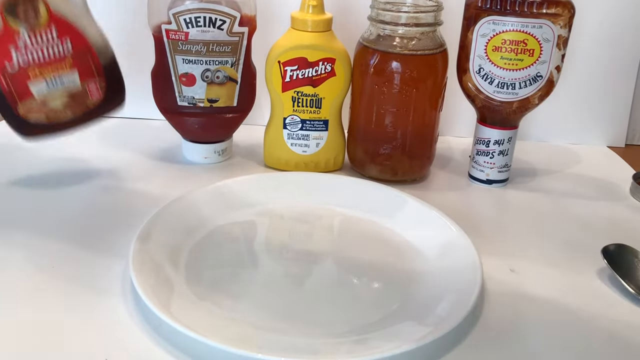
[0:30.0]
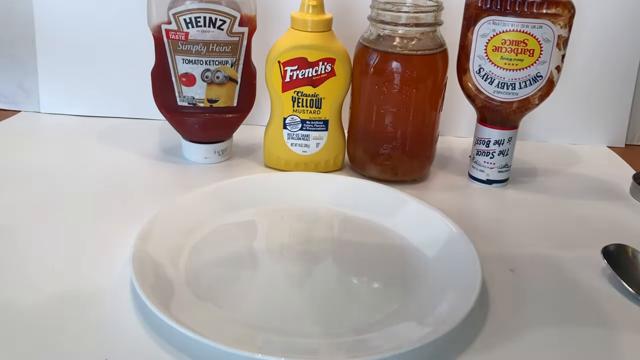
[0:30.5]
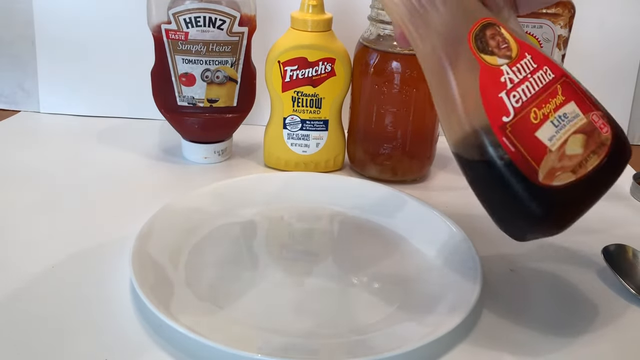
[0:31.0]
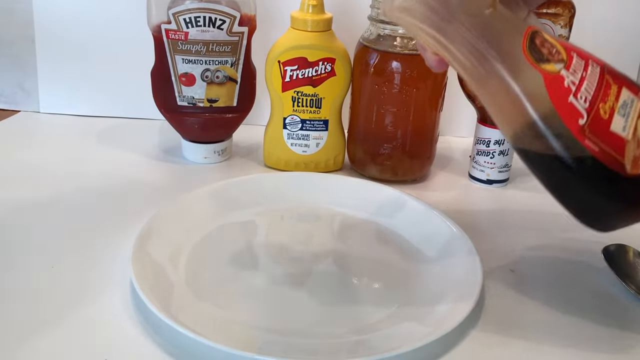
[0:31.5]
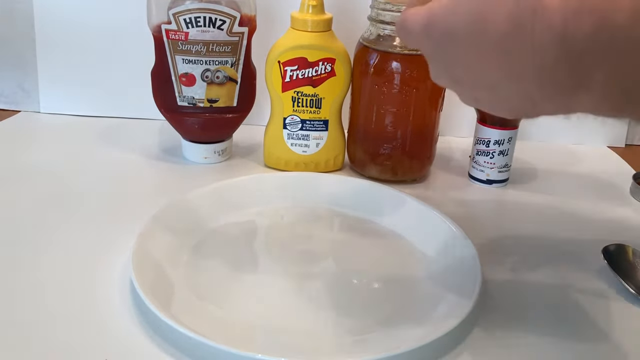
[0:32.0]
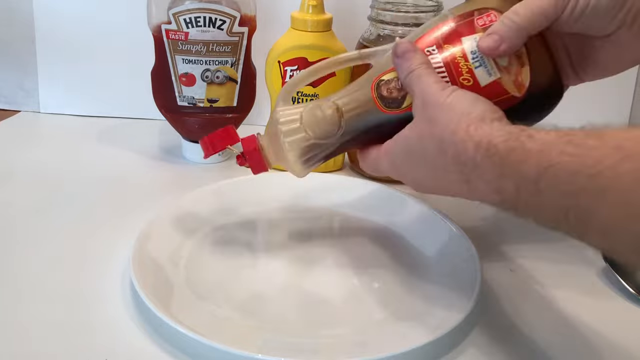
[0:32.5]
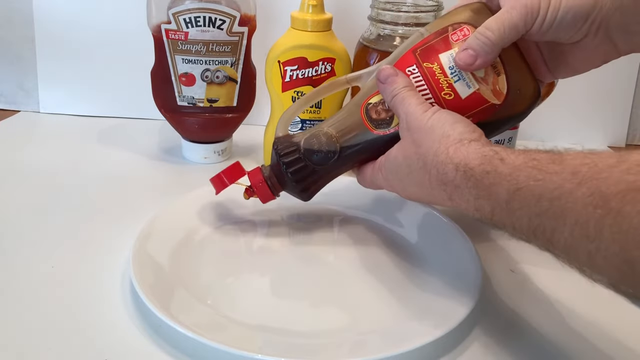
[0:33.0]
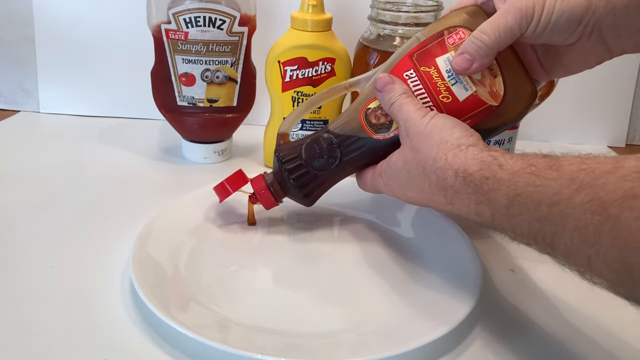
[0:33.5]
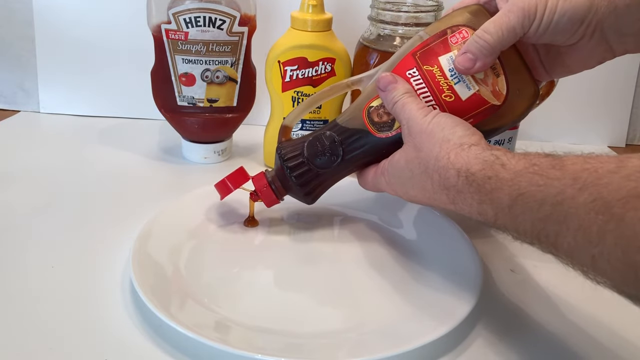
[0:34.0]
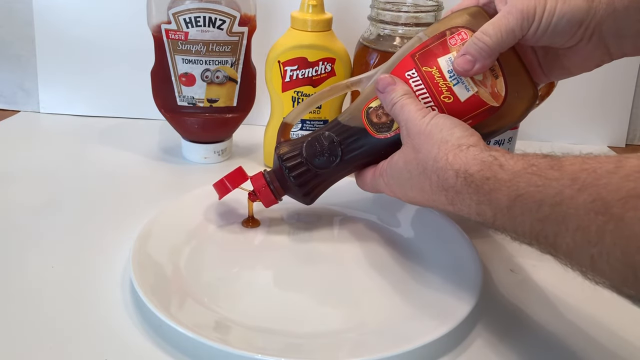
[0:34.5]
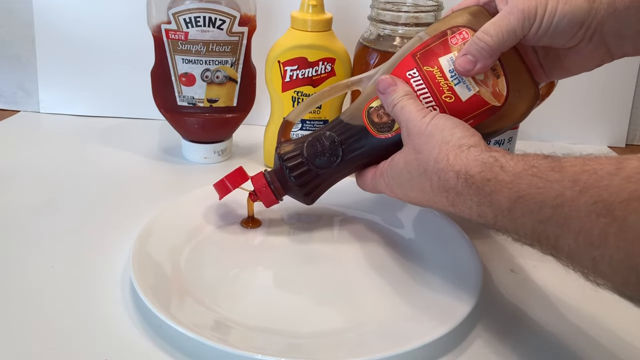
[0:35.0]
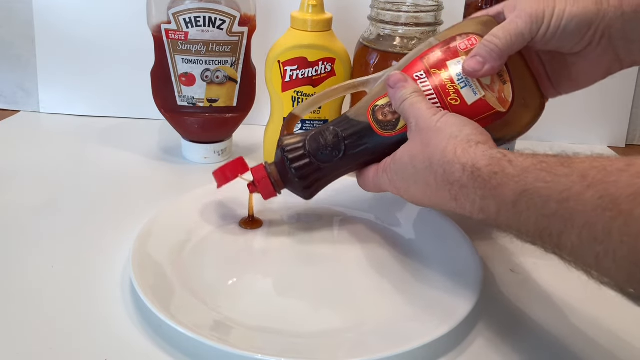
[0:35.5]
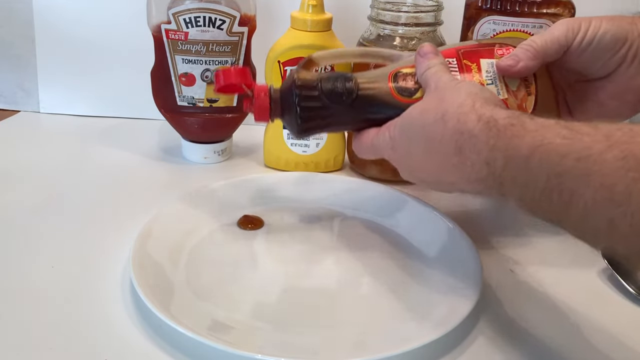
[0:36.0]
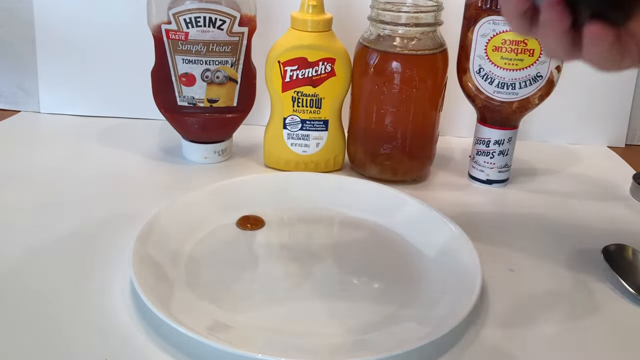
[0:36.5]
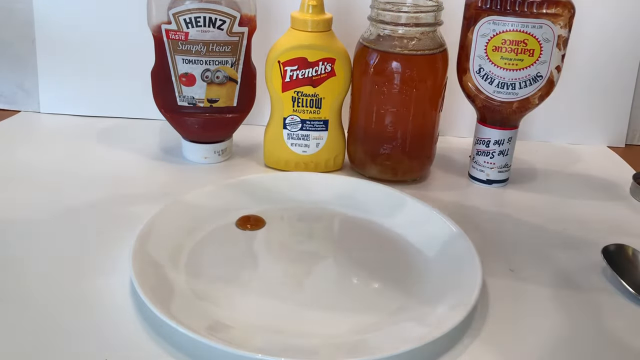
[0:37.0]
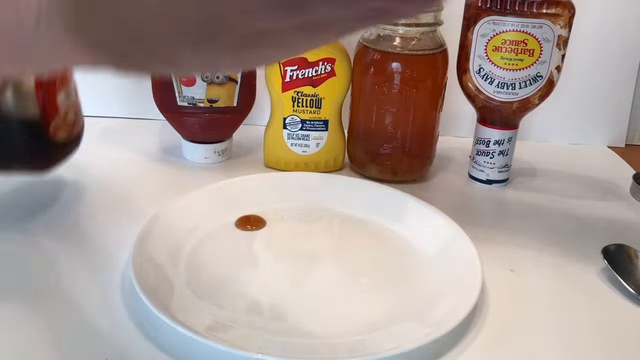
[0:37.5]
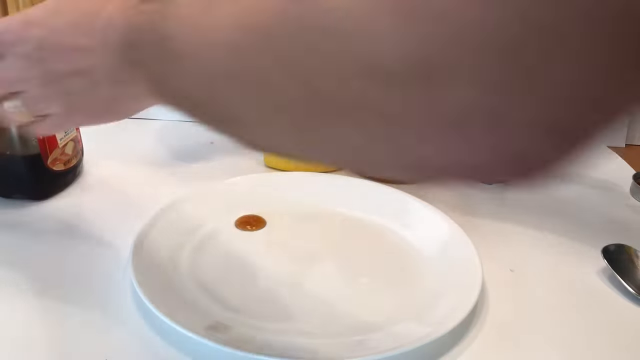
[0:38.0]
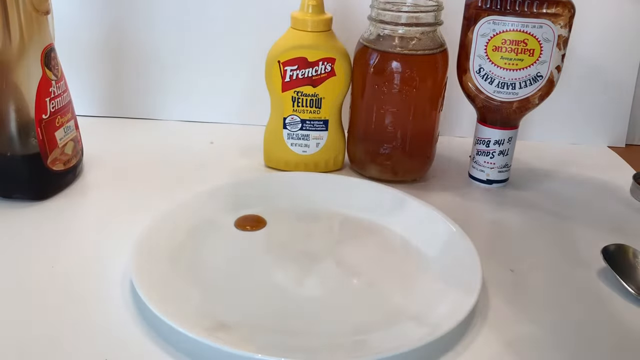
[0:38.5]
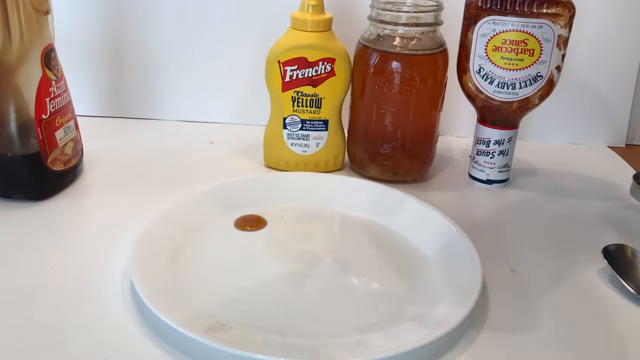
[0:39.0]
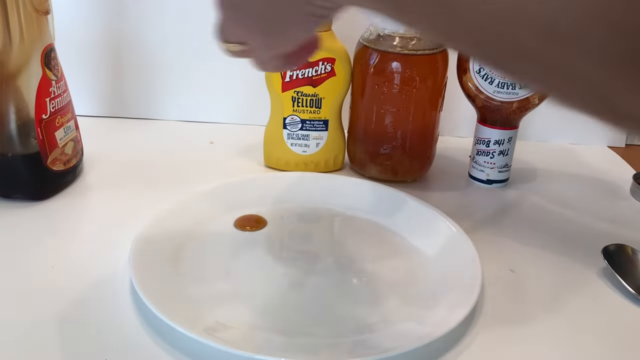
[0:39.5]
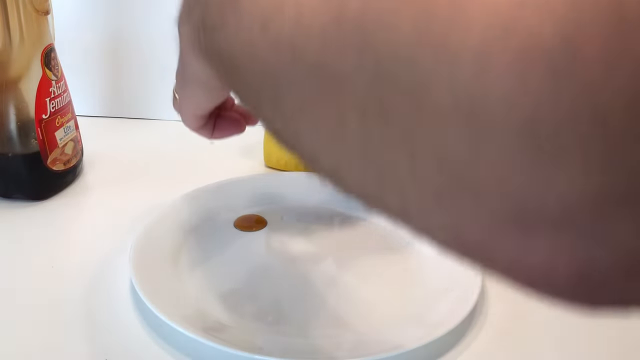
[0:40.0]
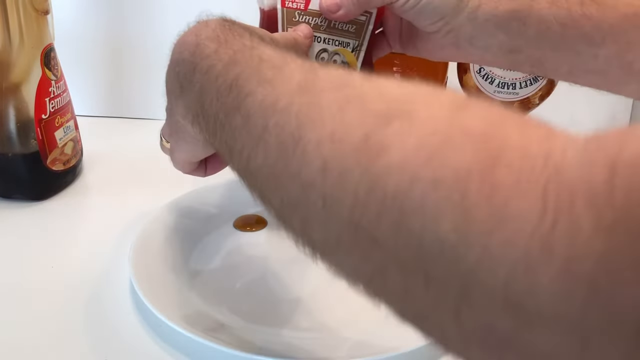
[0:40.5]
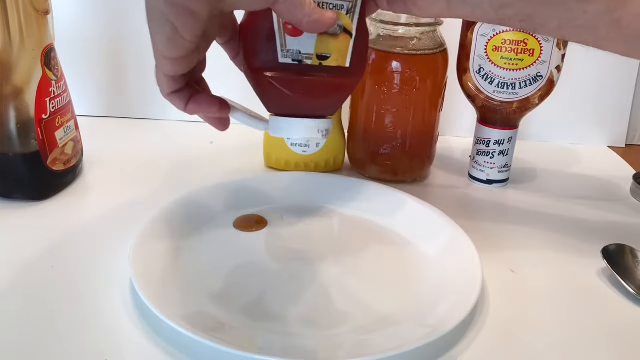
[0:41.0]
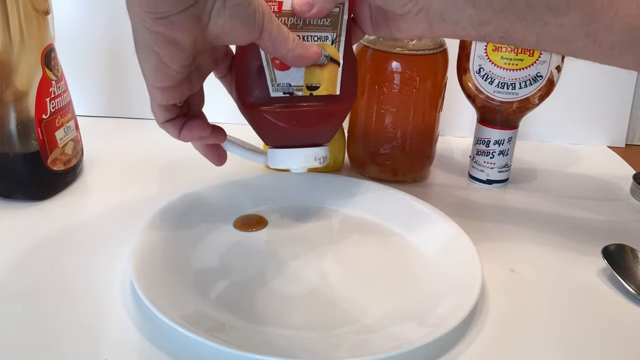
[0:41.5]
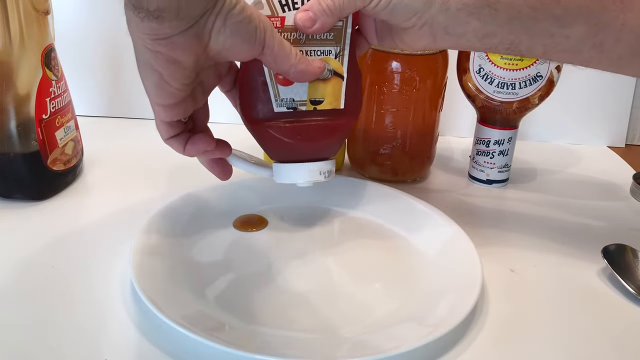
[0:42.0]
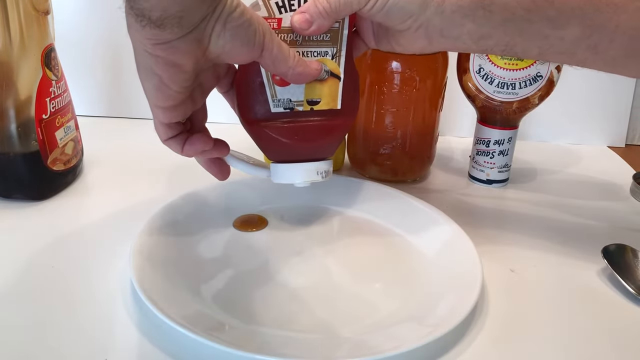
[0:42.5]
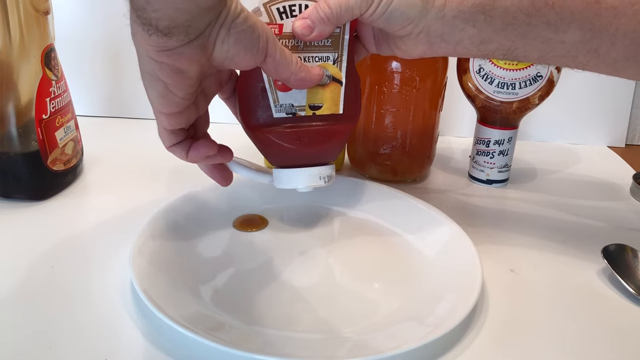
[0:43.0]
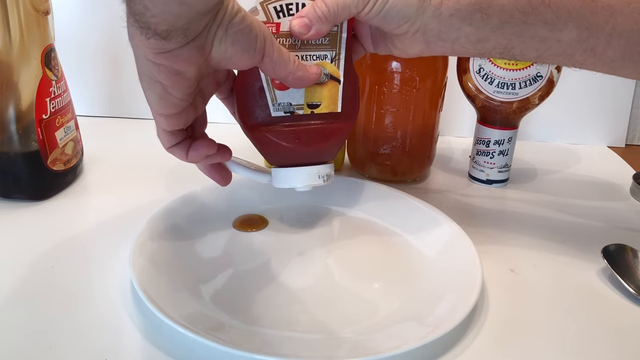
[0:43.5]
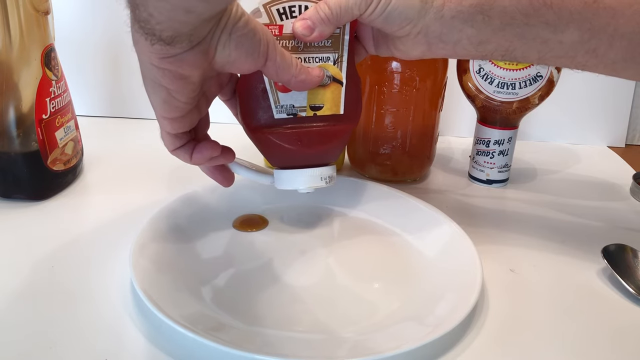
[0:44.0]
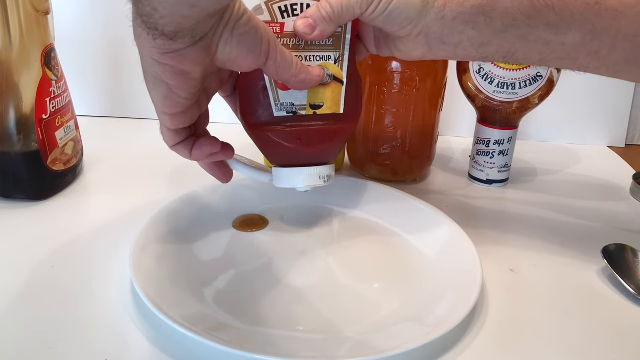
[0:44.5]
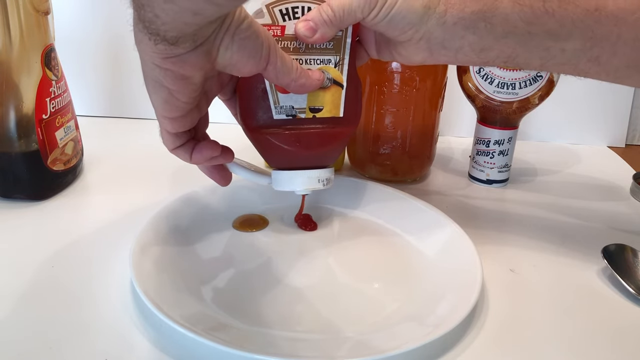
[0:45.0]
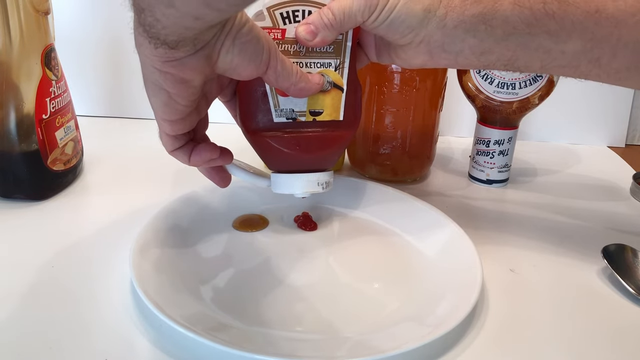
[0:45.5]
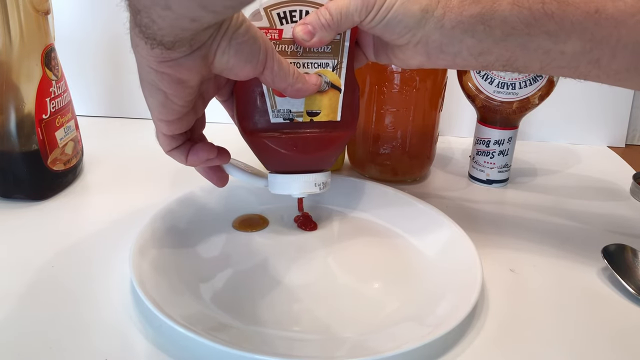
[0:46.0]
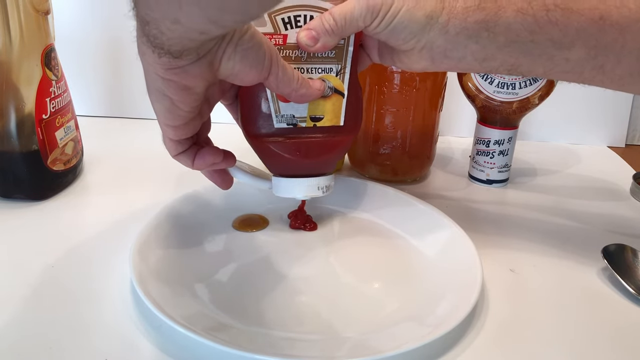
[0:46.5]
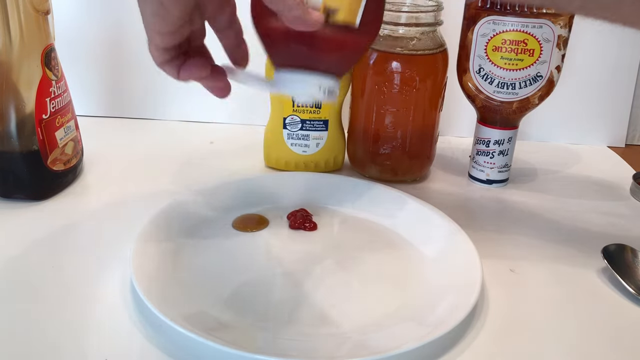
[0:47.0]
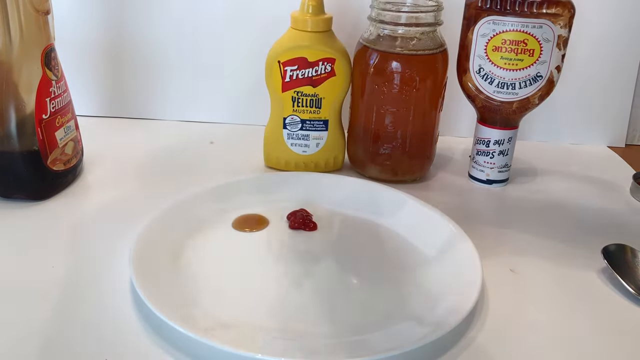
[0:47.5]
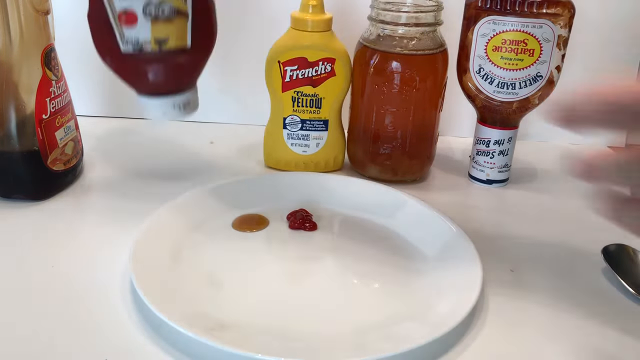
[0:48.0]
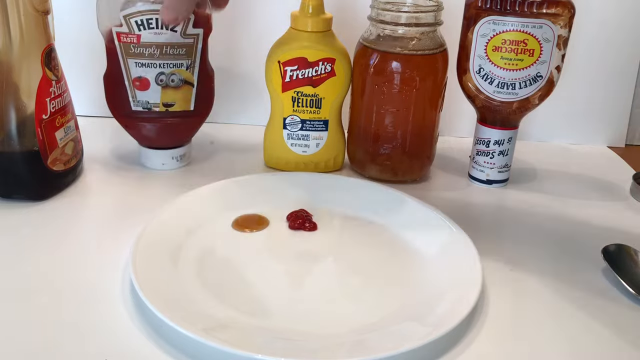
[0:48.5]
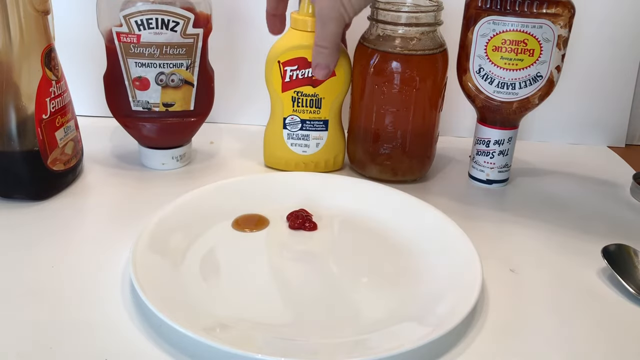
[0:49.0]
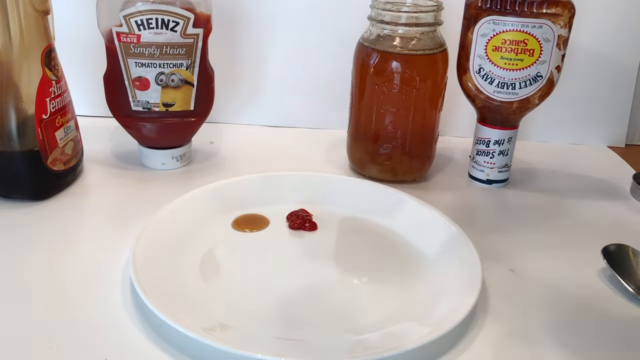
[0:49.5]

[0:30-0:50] A clean white plate is on a white countertop, with something silver on its right side that looks like it could be a spoon or another type of utensil. Behind the plate, from left to right, are syrup, Heinz ketchup, French's yellow mustard, a mason jar filled with honey, and Sweet Baby Ray's barbecue sauce. The man picks up the syrup and pours a little drop on the top left corner of the plate. He picks up the Heinz ketchup, opens the cap, and squeezes a drop to the left of the syrup; he squeezes hard, but the ketchup does not come out at first, so it takes a little longer. Then he picks up the French's mustard.